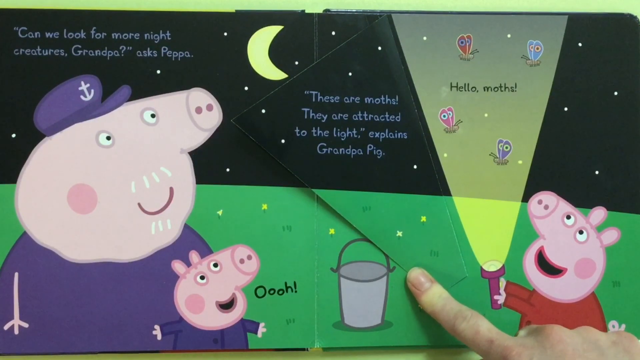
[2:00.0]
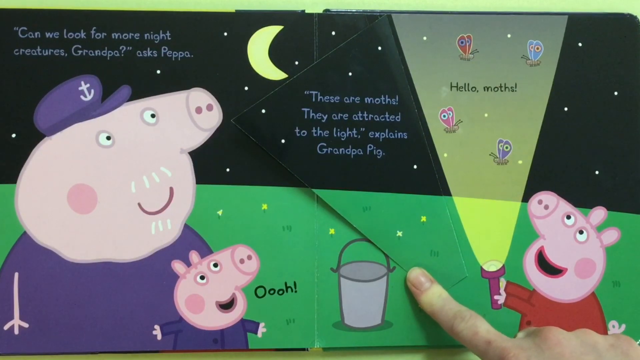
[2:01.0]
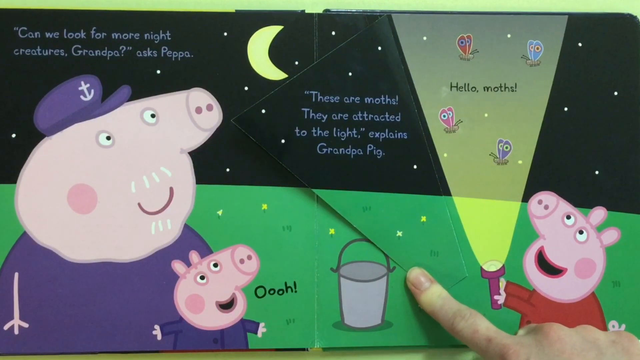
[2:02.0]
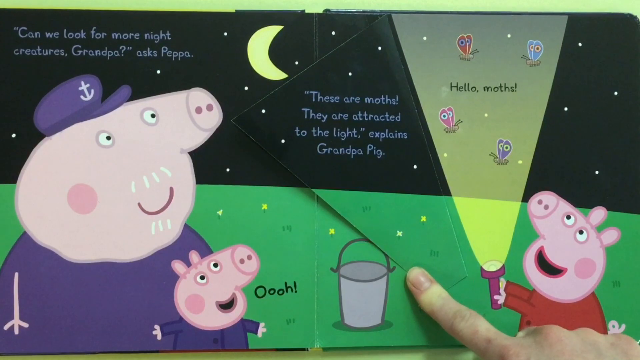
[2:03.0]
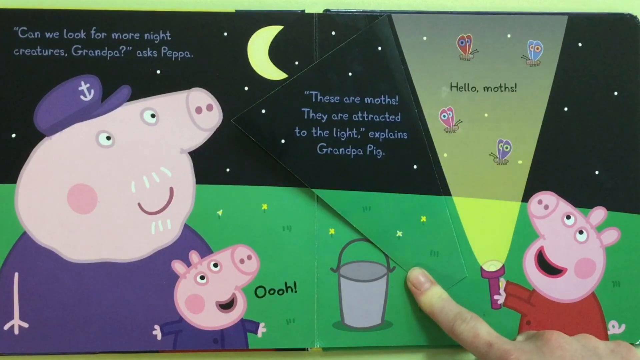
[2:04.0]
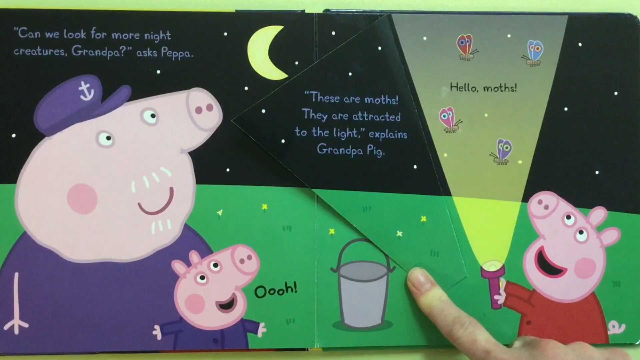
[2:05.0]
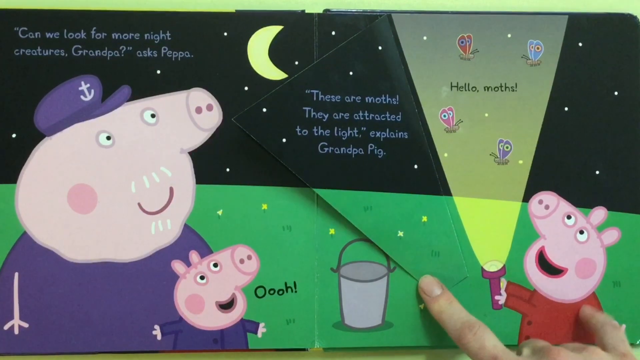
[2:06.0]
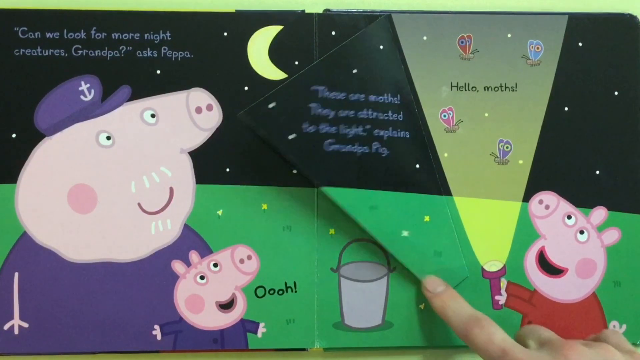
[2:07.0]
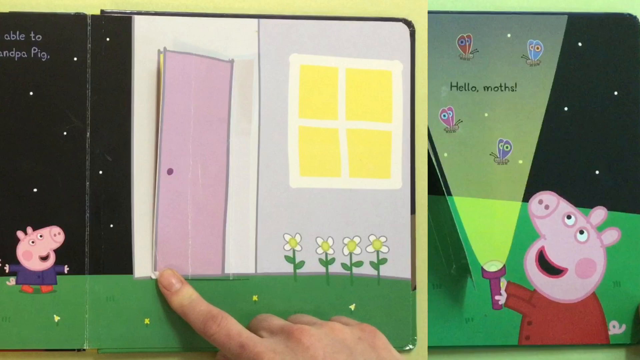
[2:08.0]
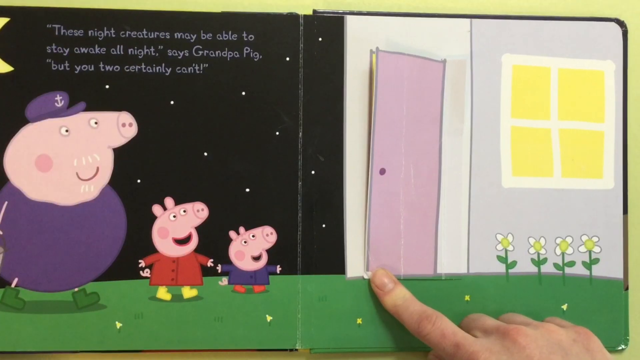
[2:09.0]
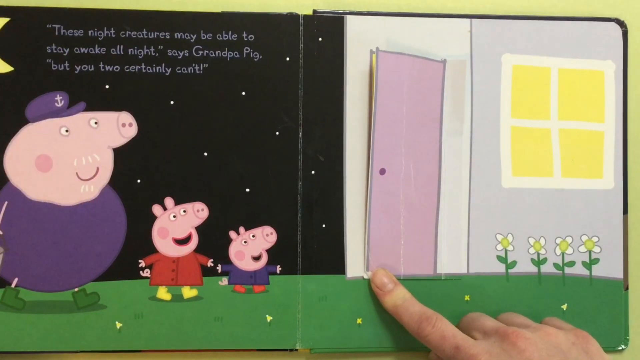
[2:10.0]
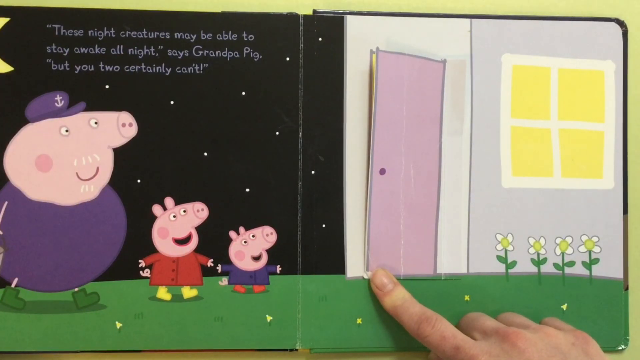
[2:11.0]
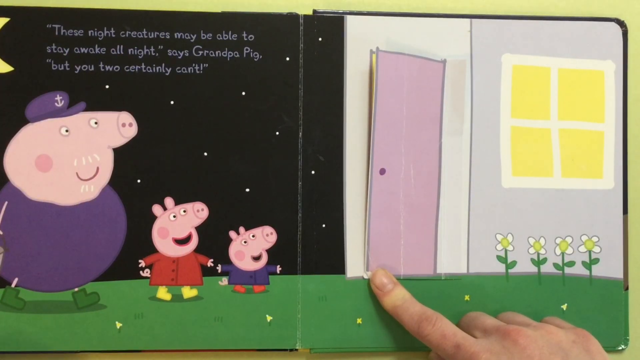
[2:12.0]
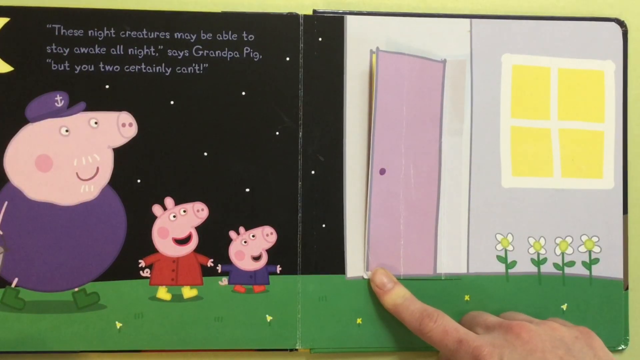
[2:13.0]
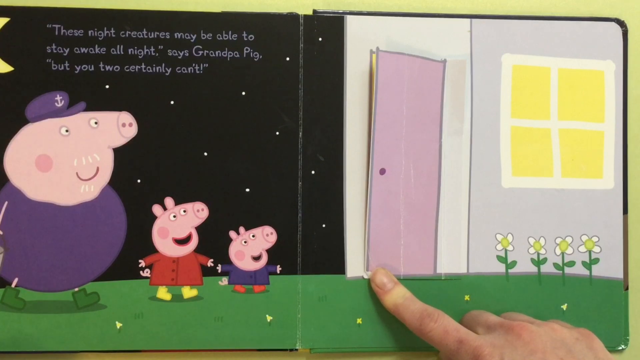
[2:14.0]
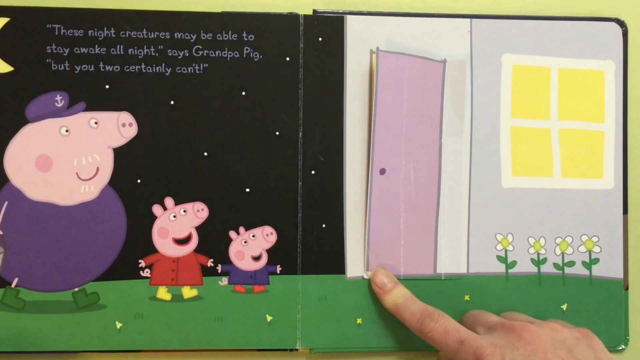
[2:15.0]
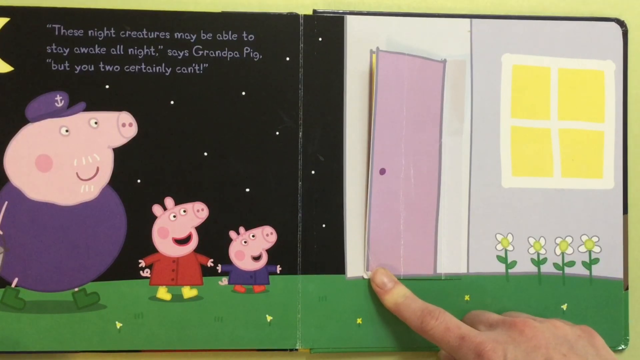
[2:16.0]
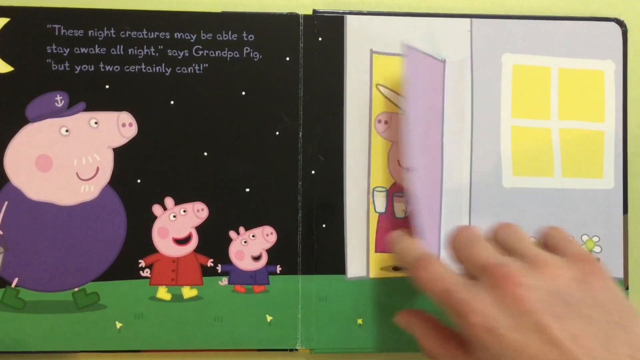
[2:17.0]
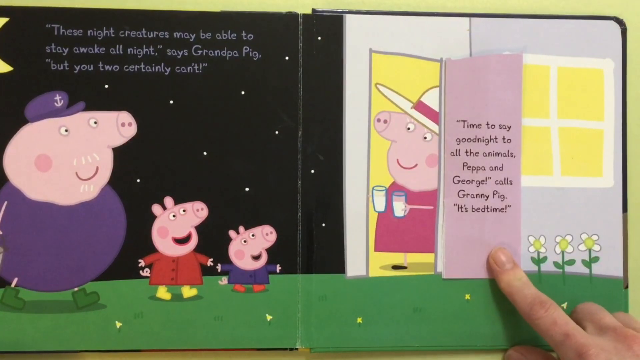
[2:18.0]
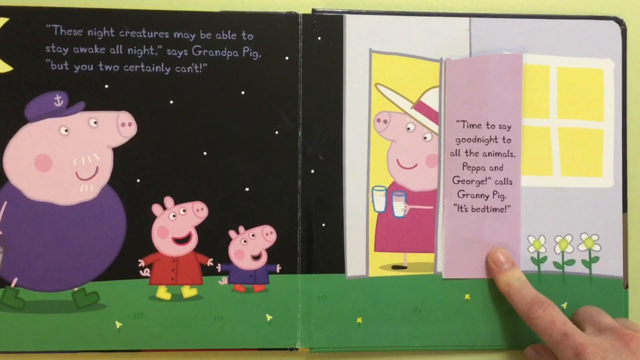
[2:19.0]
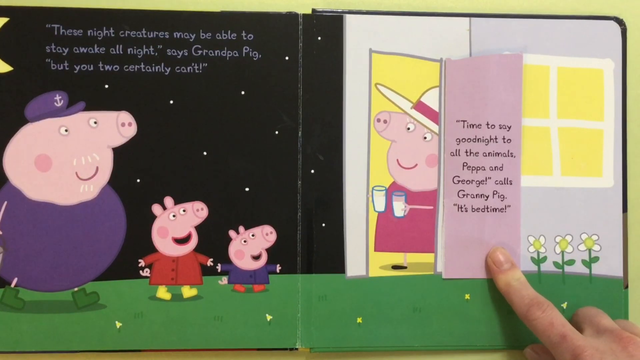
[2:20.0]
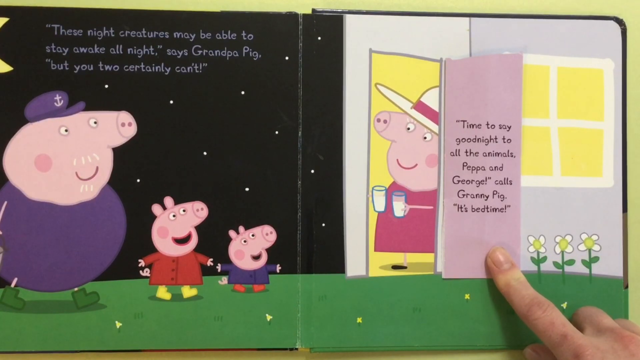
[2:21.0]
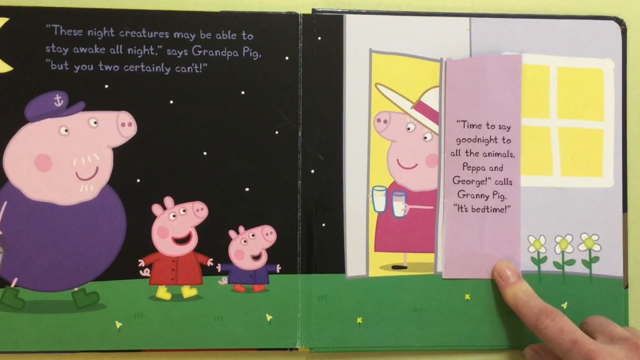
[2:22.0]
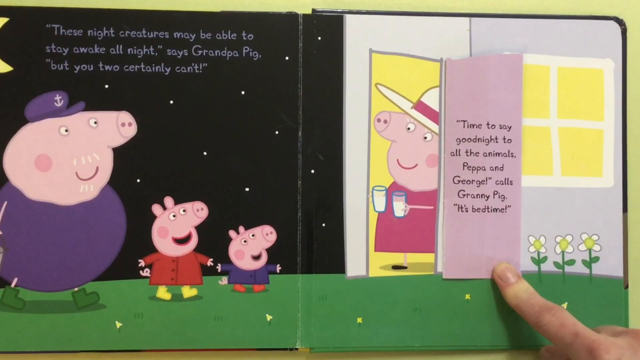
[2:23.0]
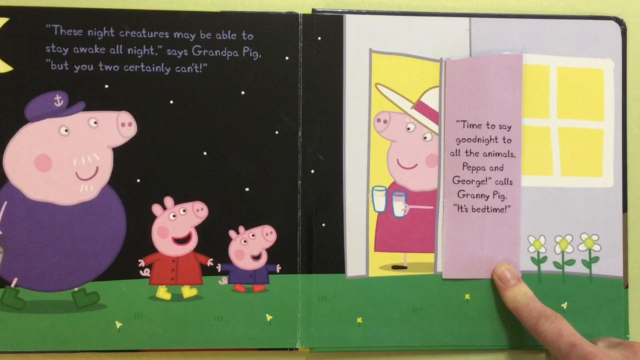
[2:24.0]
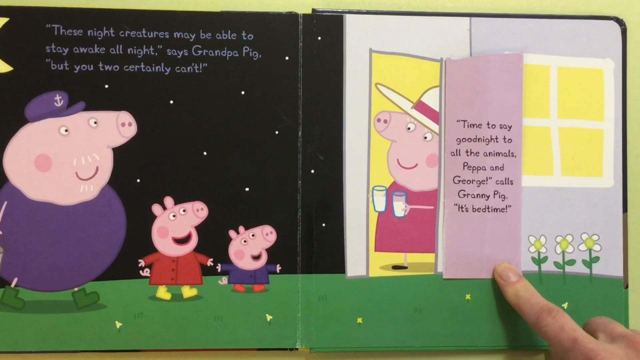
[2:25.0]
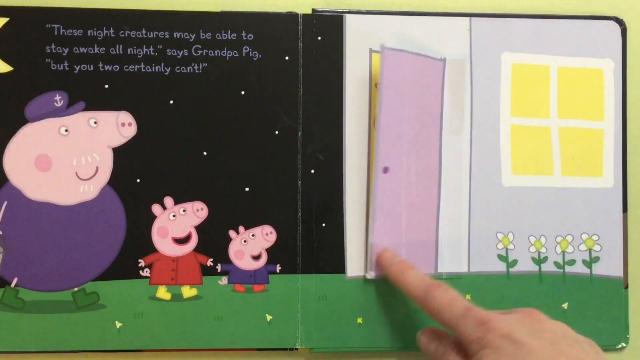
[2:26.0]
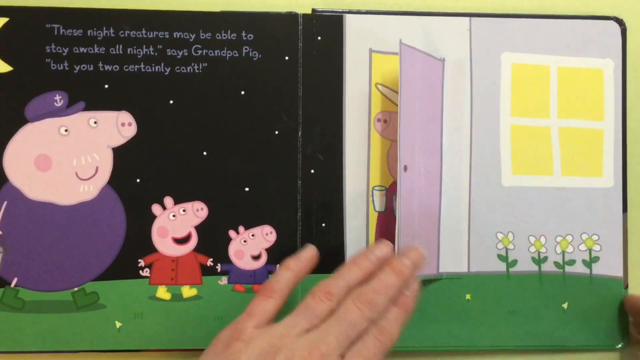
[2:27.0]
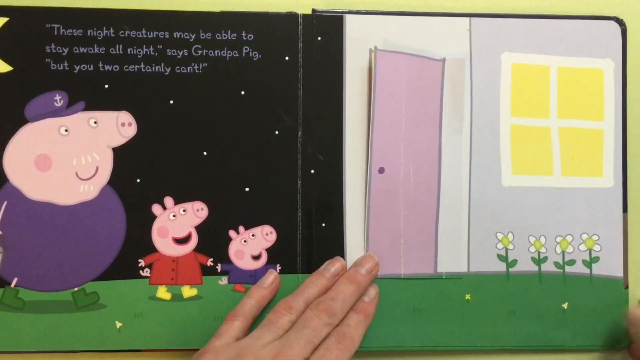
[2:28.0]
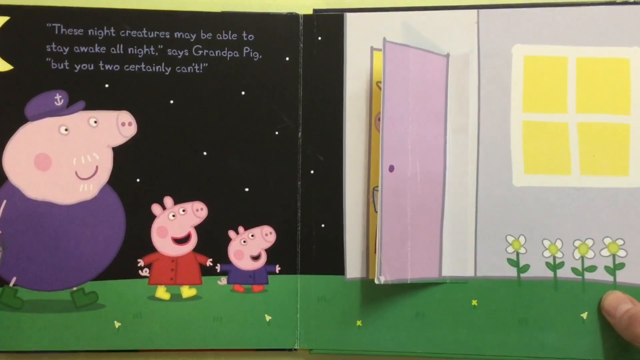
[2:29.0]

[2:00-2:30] The interactive Peppa Pig book, The Night Creatures, shows the text: "Can we look for more night creatures? Grandpa asked Peppa." The flap is turned to reveal: "these are moths. They are attracted to the light, explains Grandpa Pig. Hello, moths." Peppa Pig, a little girl piglet in a red dress, points the flashlight straight up into the night sky, where there are four moths: one blue, one purple, one pink and one orange. Her little brother, wearing purple, is going "ooh" with a big smile. Grandpa Pig wears a purple sailor hat and purple outfit, and the moon and stars are in the darkness.